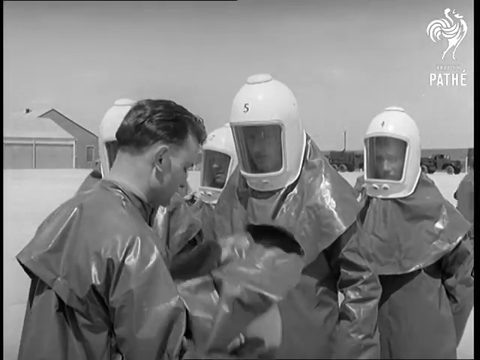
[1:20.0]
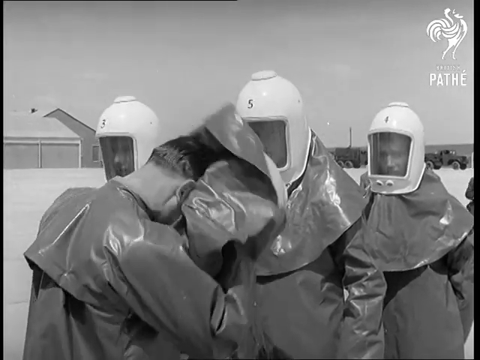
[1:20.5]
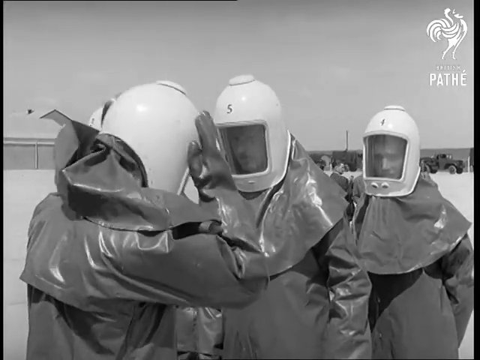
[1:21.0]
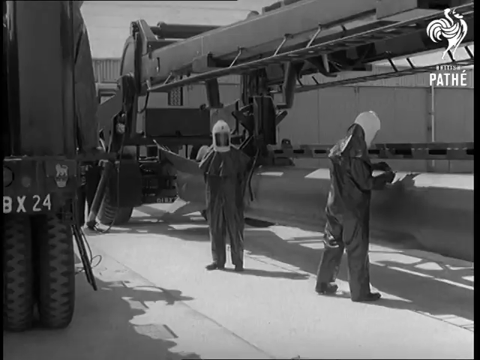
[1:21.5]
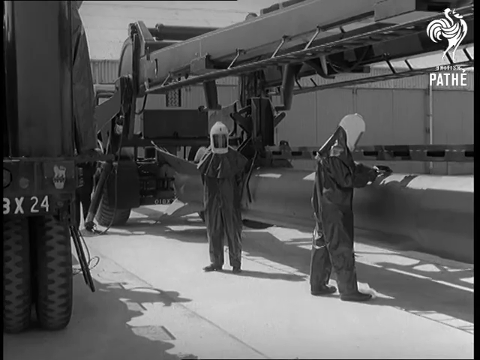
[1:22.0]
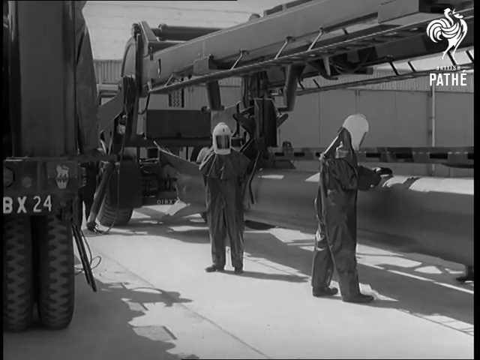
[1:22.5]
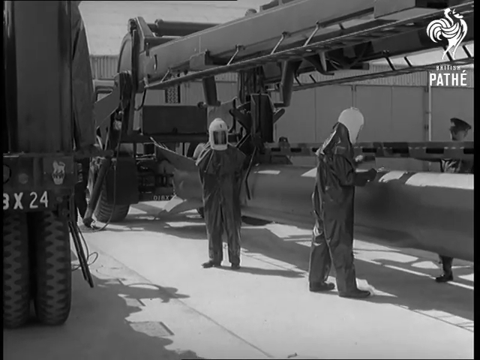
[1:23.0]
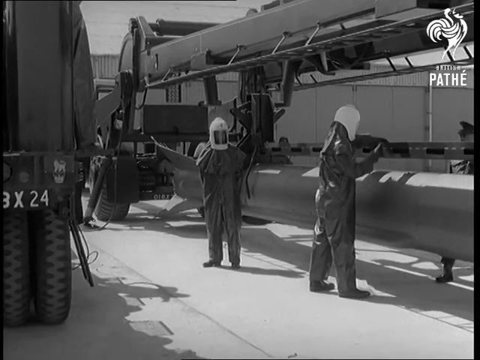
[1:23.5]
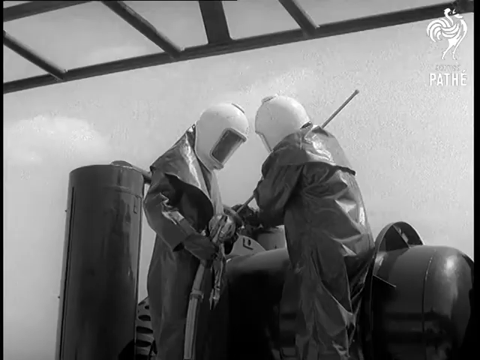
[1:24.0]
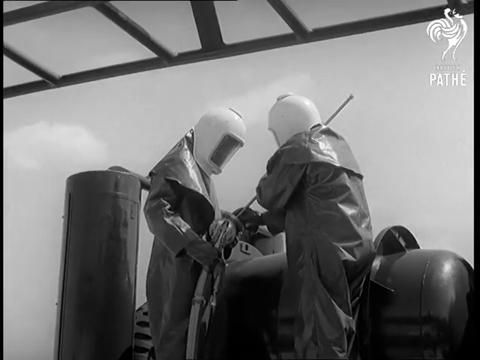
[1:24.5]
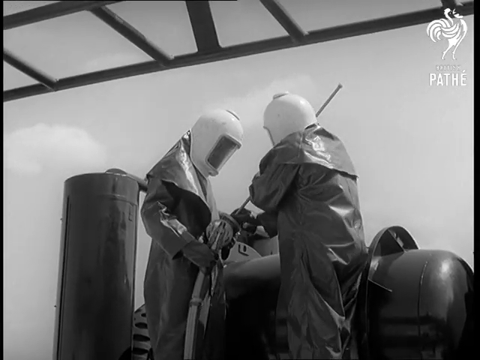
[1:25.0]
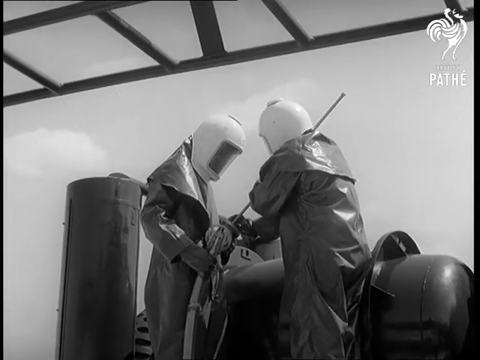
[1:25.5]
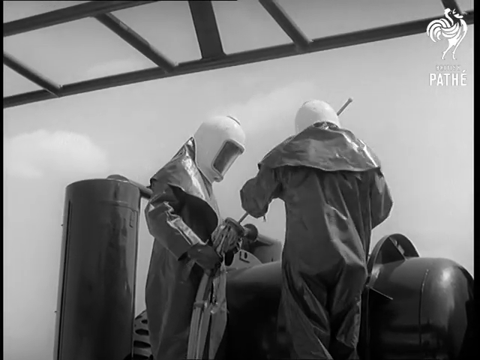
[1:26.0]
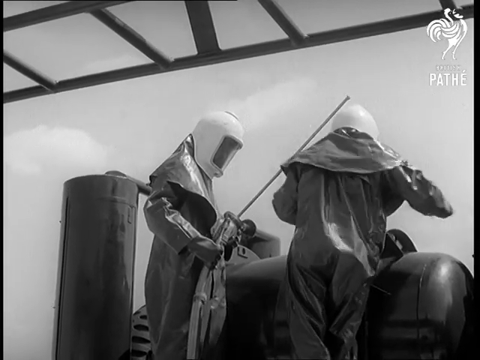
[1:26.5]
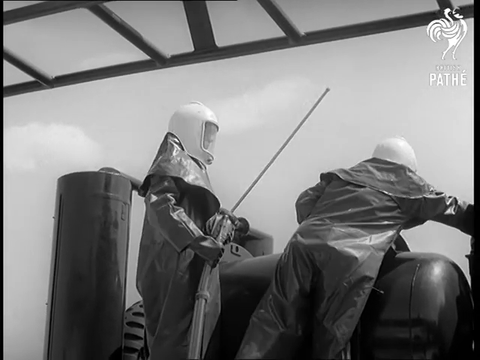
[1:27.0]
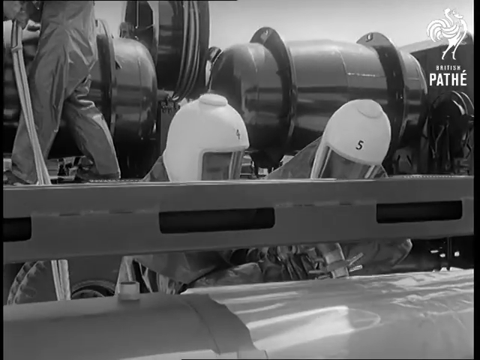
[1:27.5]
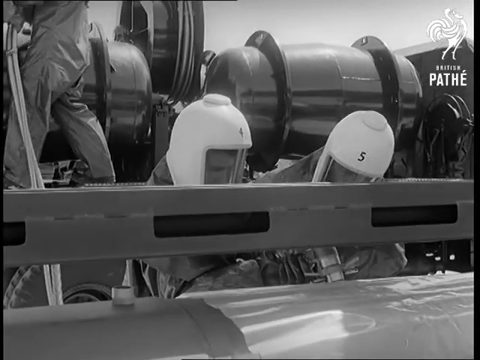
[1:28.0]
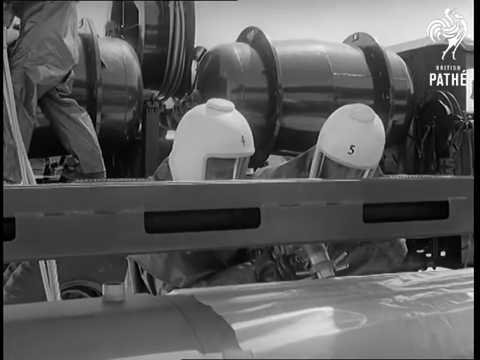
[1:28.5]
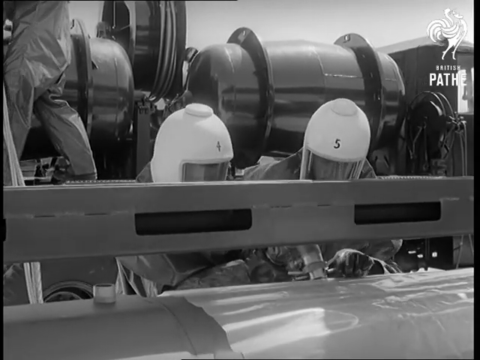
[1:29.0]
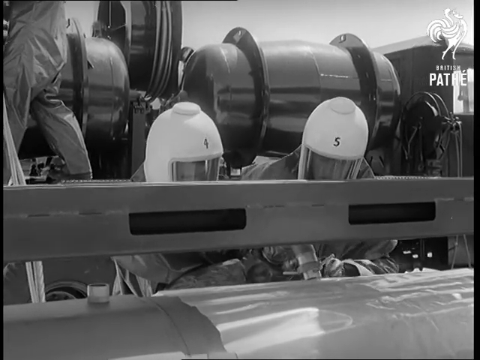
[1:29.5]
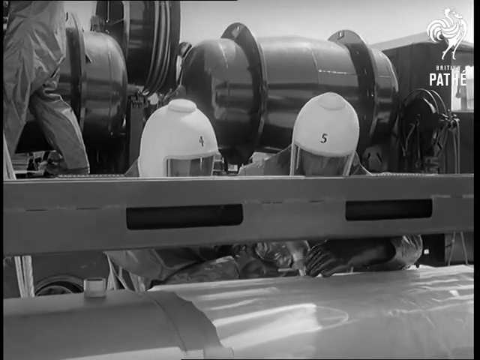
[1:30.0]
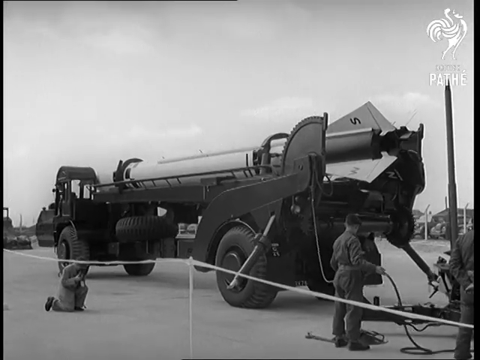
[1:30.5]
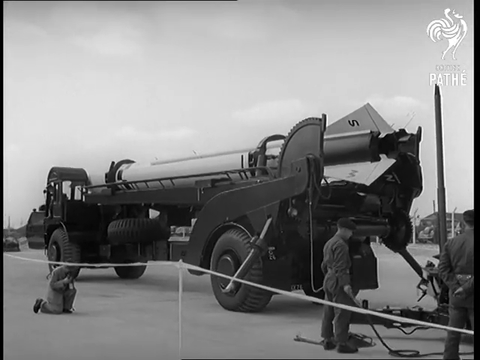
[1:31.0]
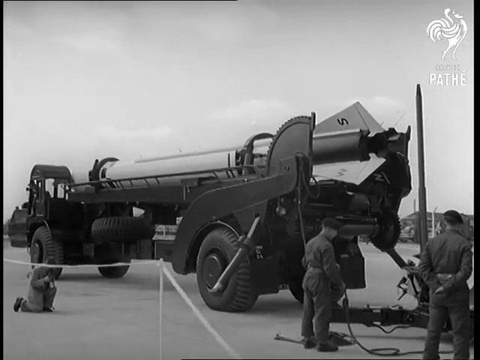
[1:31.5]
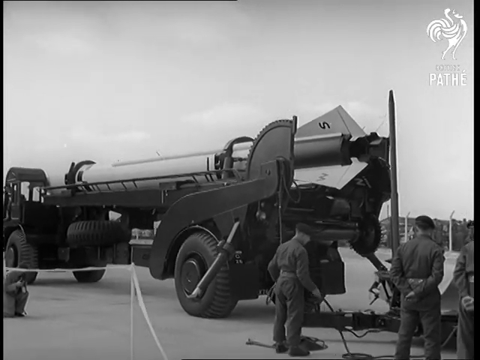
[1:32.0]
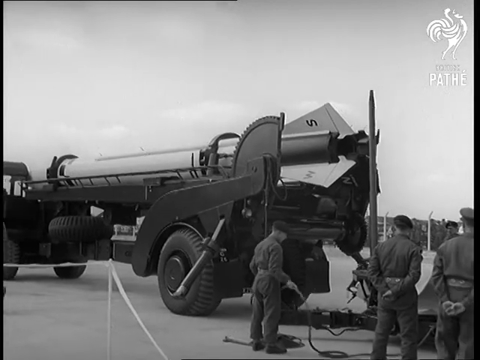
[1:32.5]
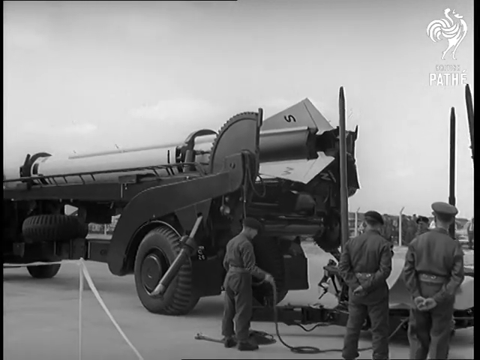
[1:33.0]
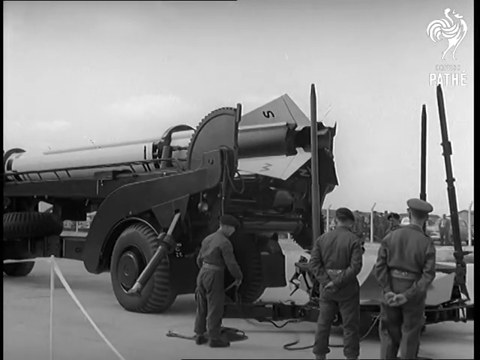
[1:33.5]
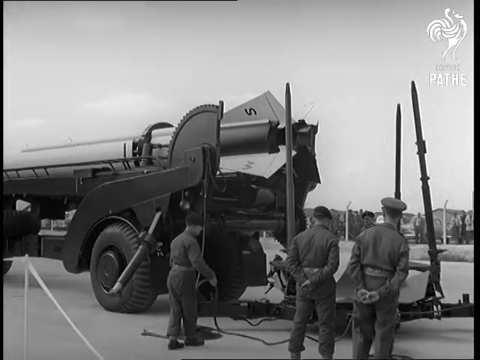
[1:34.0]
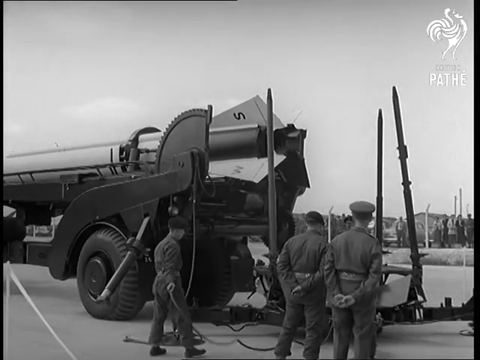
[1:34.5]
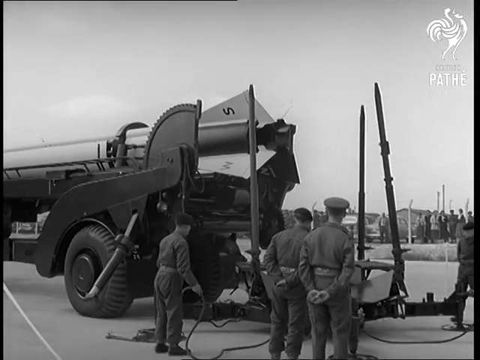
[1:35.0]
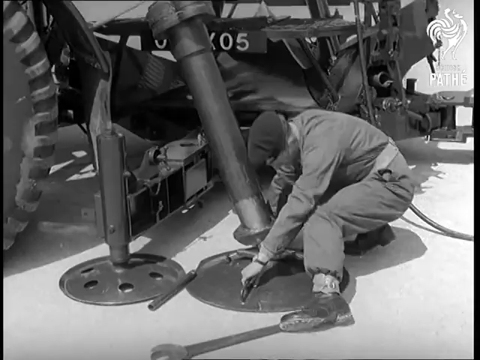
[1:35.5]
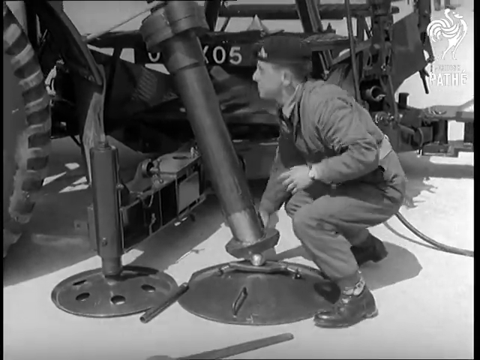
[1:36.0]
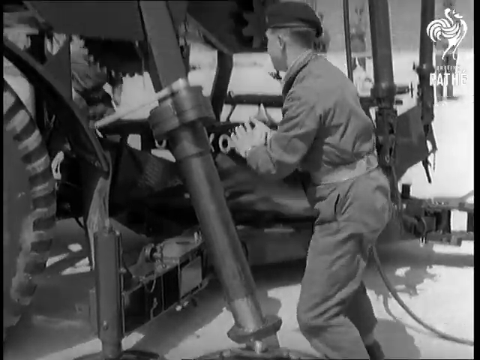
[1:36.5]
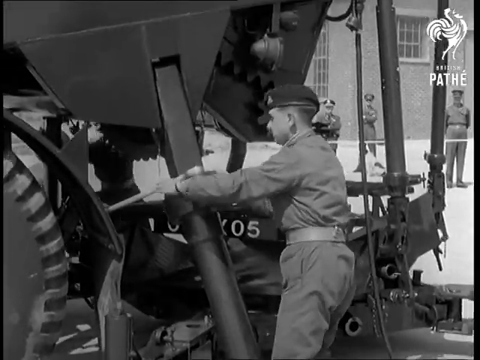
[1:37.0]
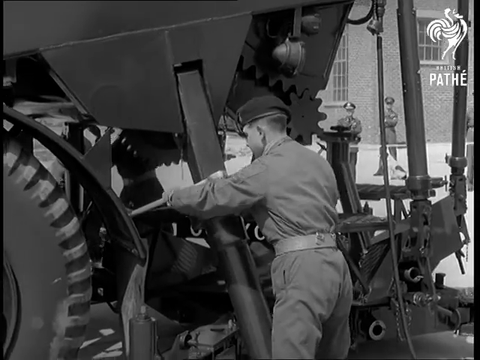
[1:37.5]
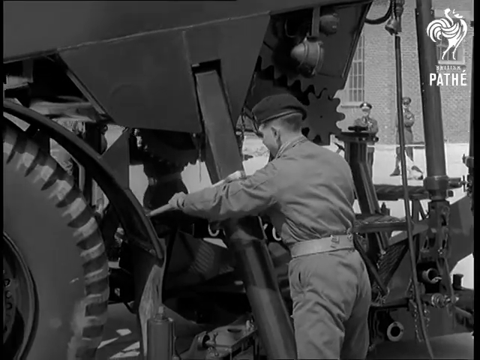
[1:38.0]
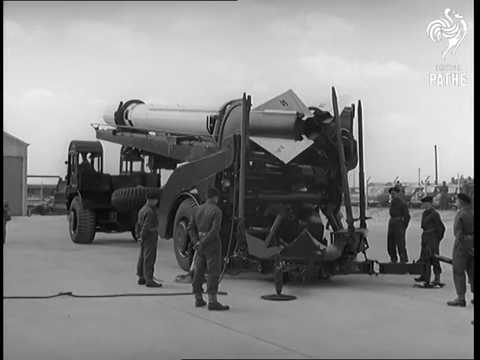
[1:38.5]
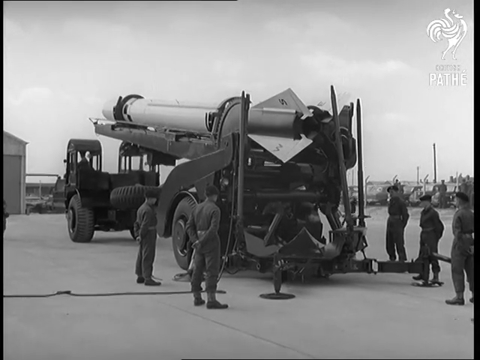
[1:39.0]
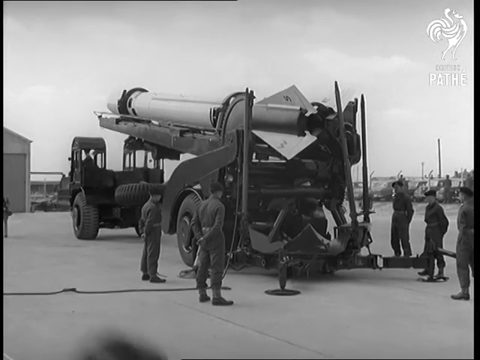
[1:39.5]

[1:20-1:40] The five men in protective gear with helmets are shown, and one man is putting on his helmet. Two men in the same type of protective gear, which covers them from head to ankles, stand by the large vehicle carrying the long pipe, which has the shape of a rocket. Two more men in the same gear stand next to some kind of equipment that looks like a horizontal barrel. From another angle, the two men seem to be connecting some kind of hoses to the tubular device, possibly a tank. The large truck-like vehicle with the long tubular object that looks like a rocket is shown again; it may be a rocket, since the bottom has layered wings. The truck is backing up, while three men in what looks like military uniform, one with a cap, stand to the right of the truck. The flatbed of the truck lifts up with the rocket-shaped object.